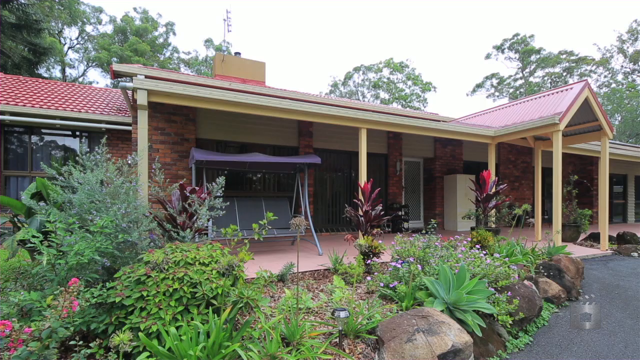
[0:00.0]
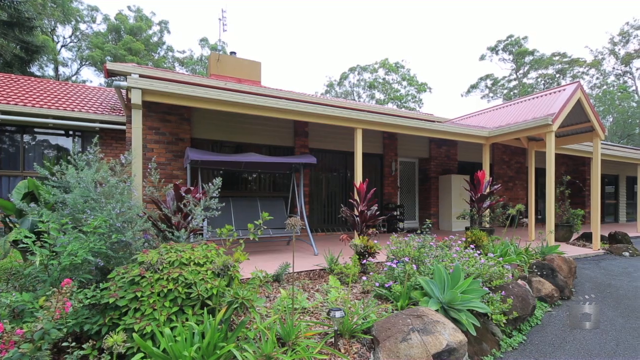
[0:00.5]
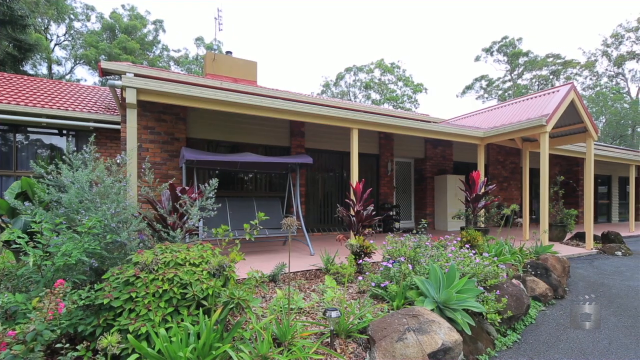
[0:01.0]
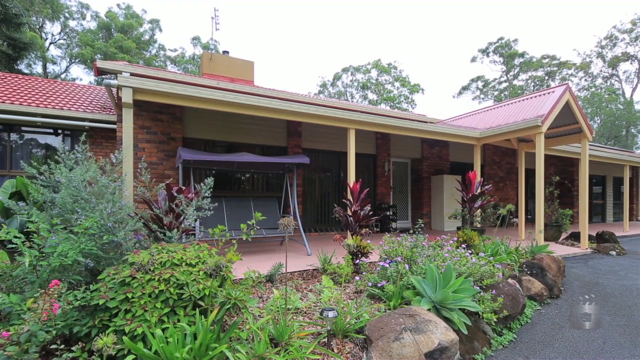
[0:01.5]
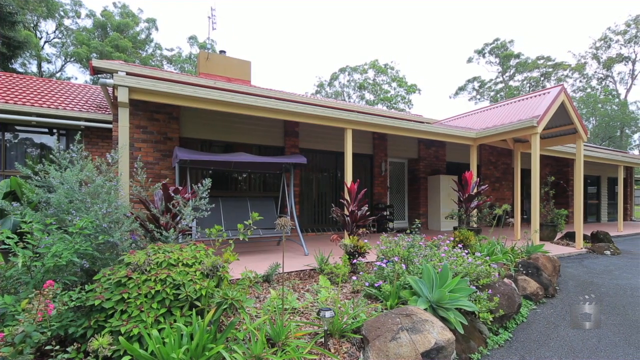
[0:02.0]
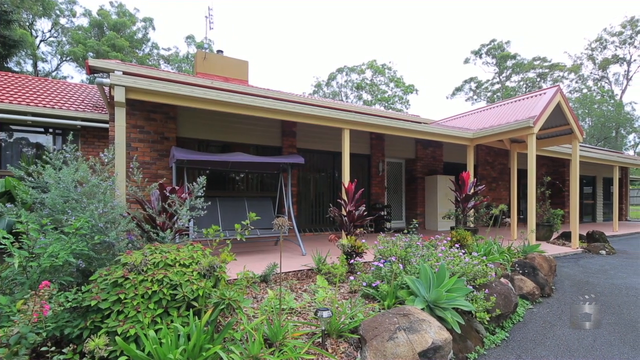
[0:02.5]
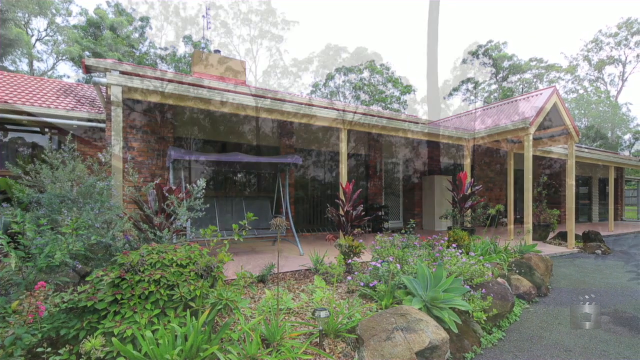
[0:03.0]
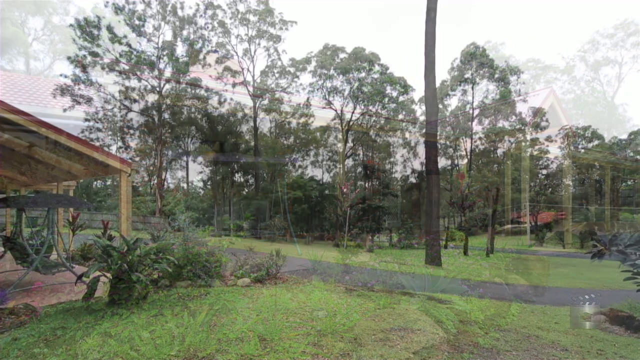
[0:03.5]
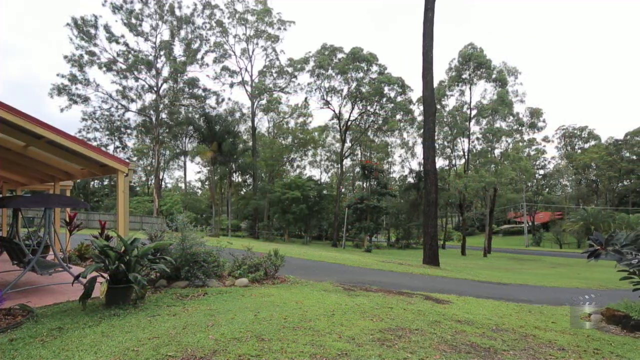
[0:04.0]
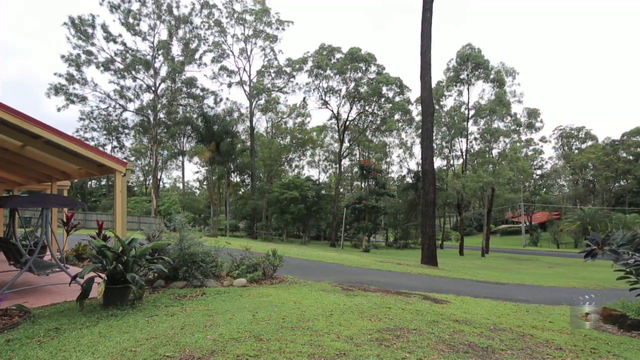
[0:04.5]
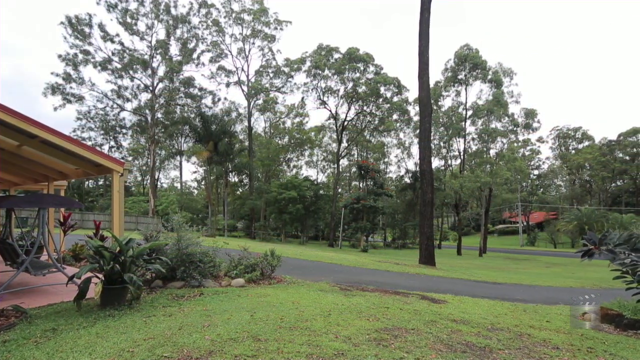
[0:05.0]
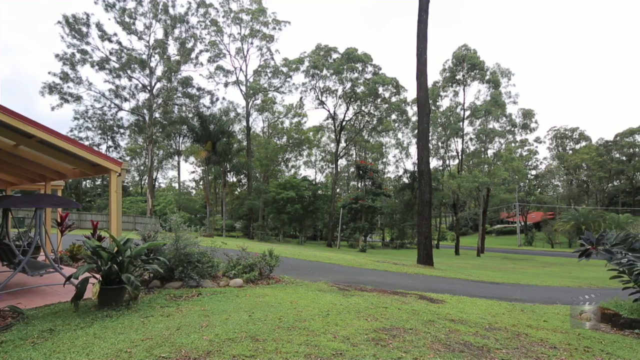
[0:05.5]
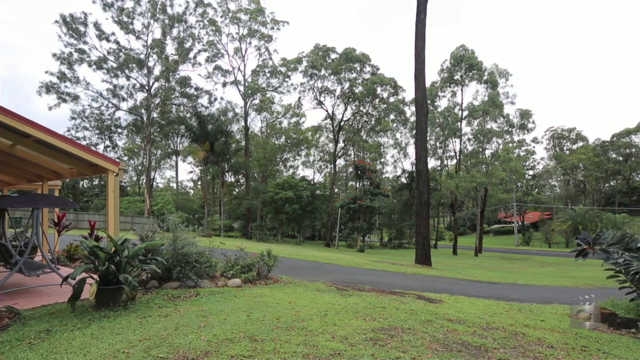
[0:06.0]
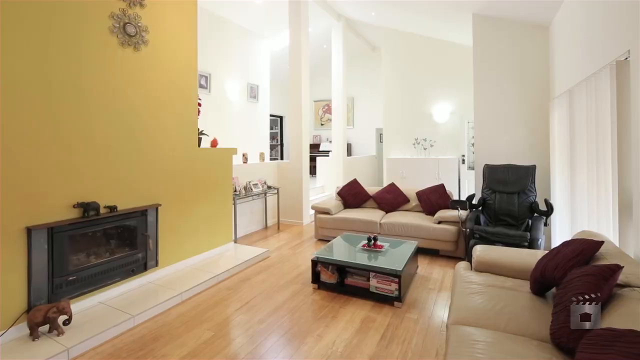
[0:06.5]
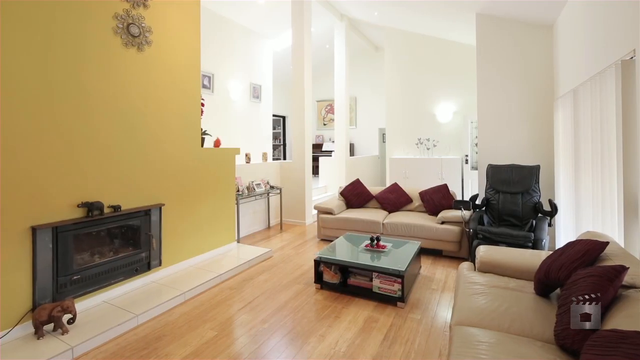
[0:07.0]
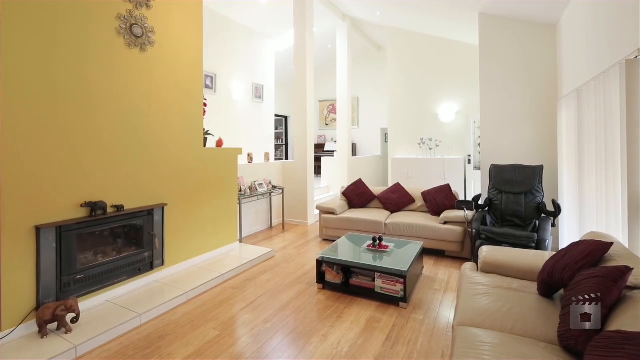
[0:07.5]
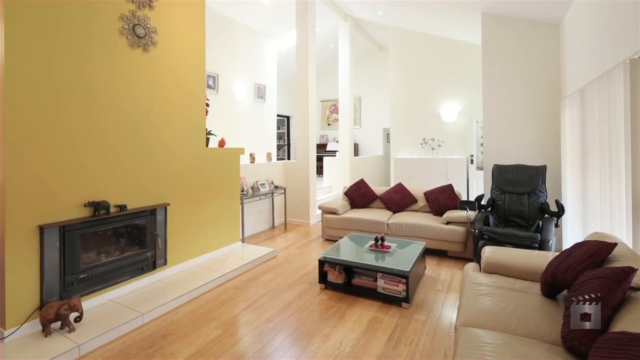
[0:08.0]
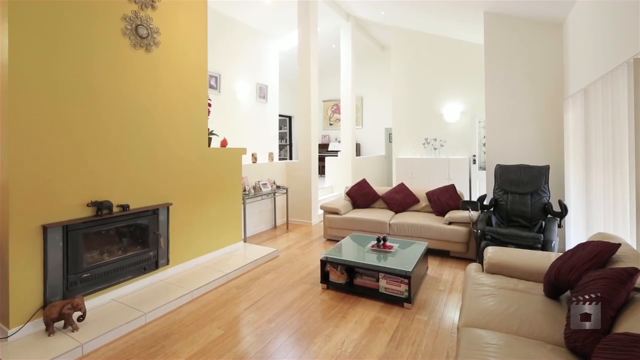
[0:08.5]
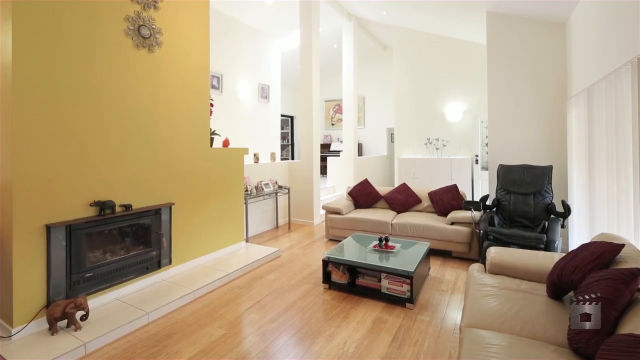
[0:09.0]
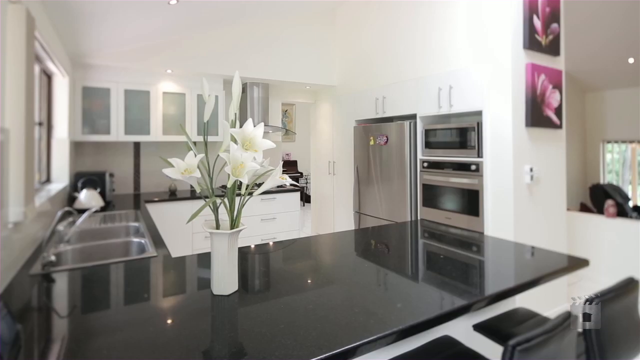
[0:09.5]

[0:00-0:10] A front view of a building opens the video. The bottom half of the frame shows a garden area with a bunch of green bushes and plants, along with about three red flowers popping up. The building is made of bricks and has a white door in the middle. The top half of the frame shows a very bright white sky, and in the background there are large trees with very green leaves. Some of the bushes on the far left move in the wind, and the camera appears to pan to the right. The scene changes to a different area with a bunch of large trees in the background as the camera continues to pan. The video then moves inside a home, where there is a yellow wall and white couches with maroonish pillows. The camera holds its focus on the room before switching to a kitchen area.